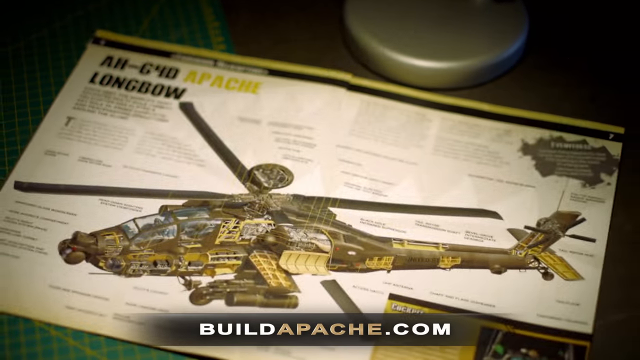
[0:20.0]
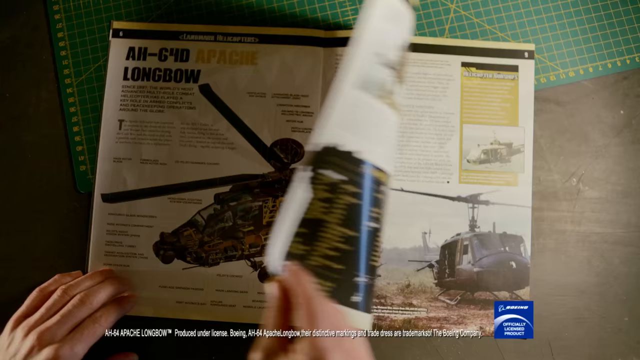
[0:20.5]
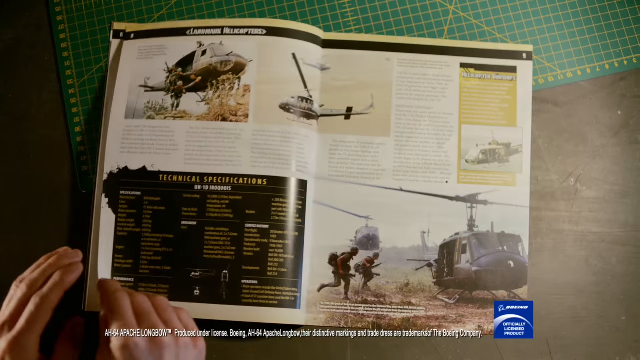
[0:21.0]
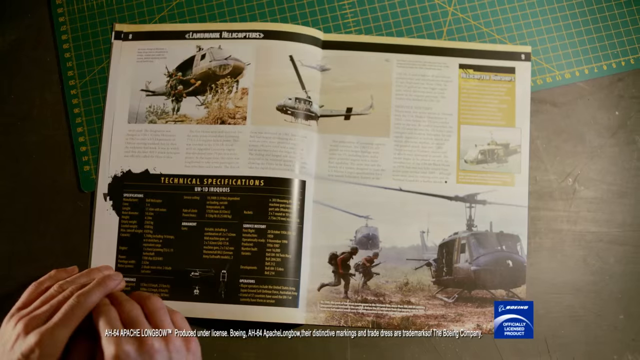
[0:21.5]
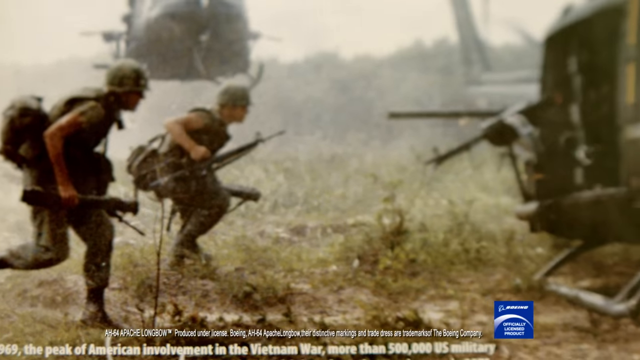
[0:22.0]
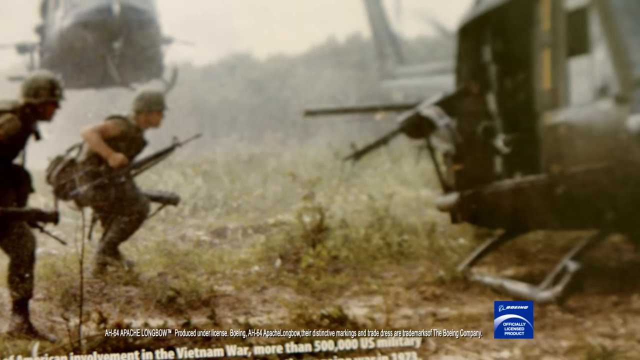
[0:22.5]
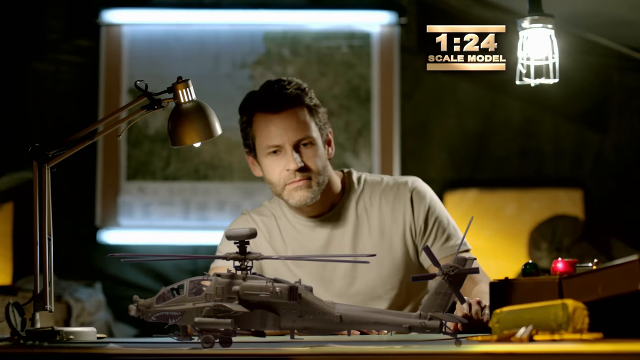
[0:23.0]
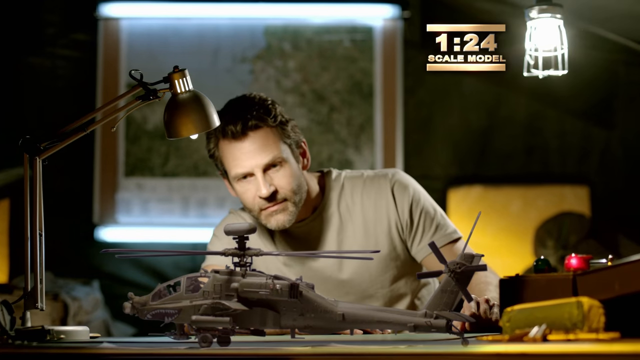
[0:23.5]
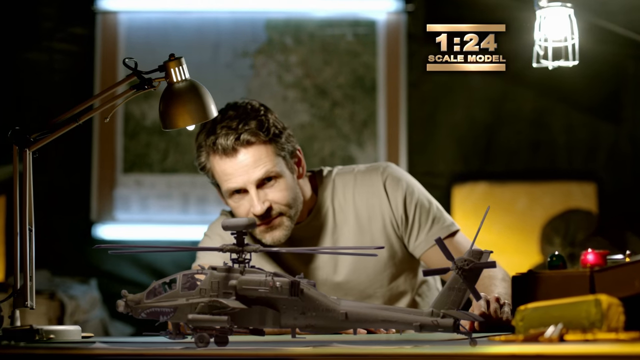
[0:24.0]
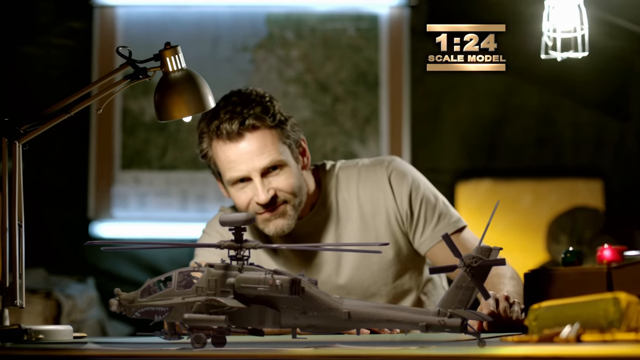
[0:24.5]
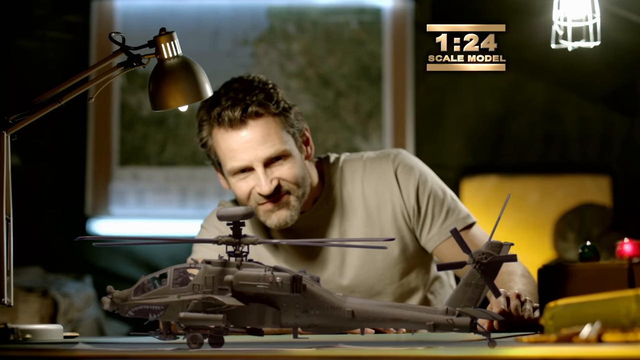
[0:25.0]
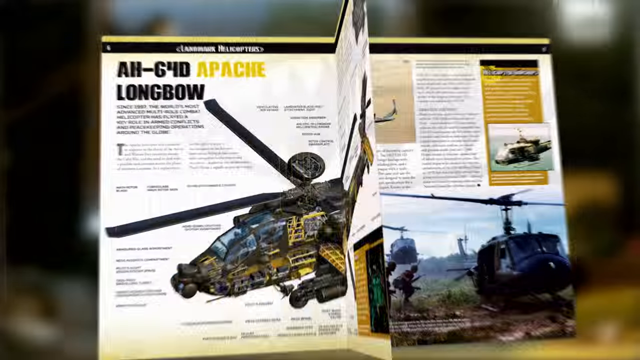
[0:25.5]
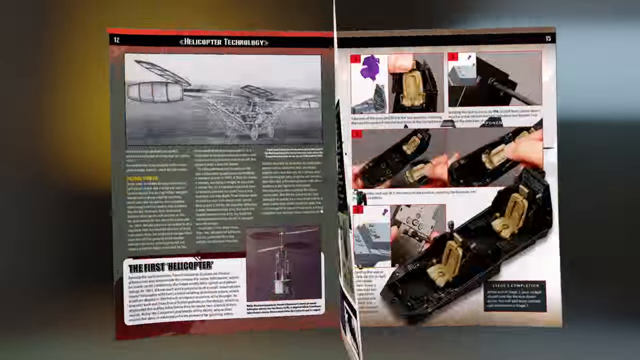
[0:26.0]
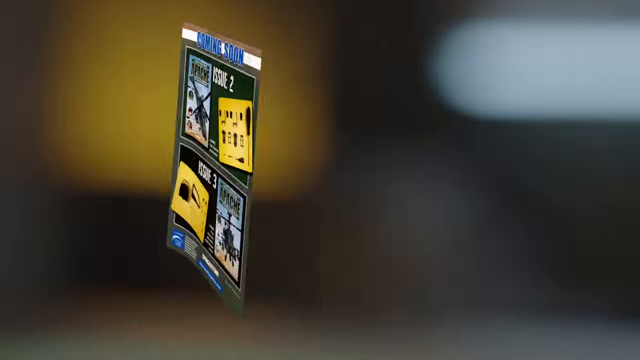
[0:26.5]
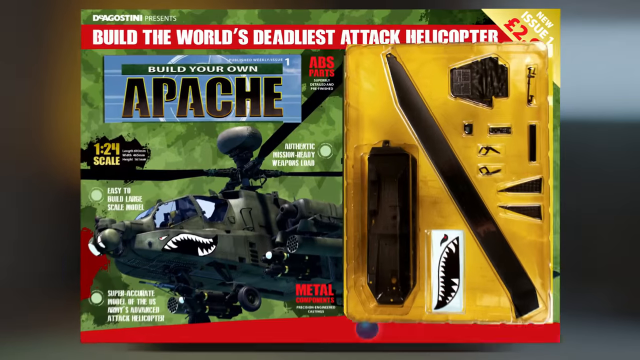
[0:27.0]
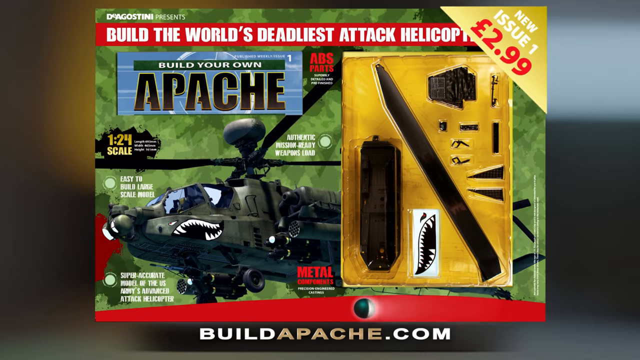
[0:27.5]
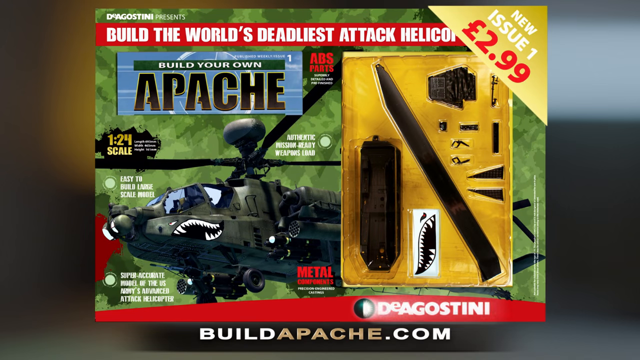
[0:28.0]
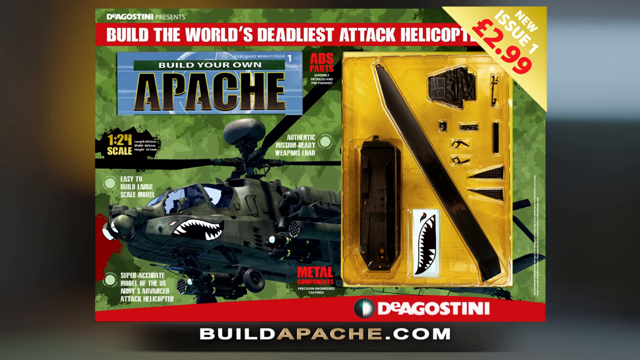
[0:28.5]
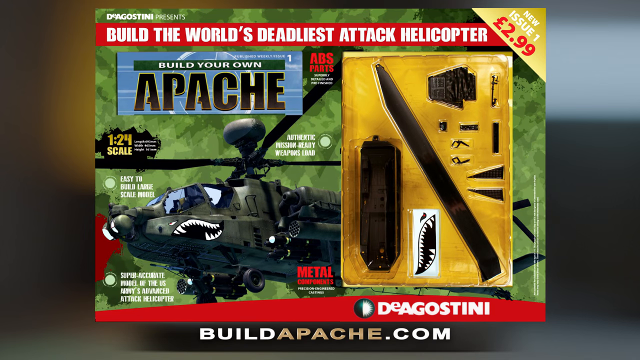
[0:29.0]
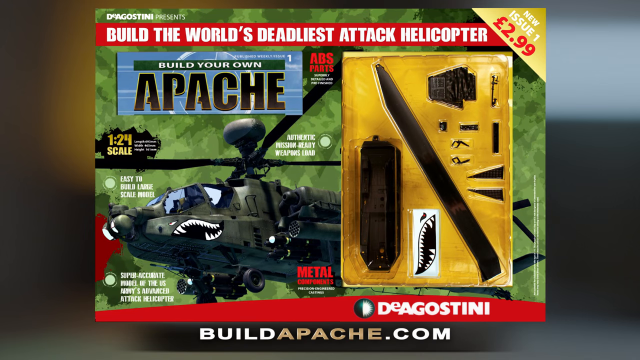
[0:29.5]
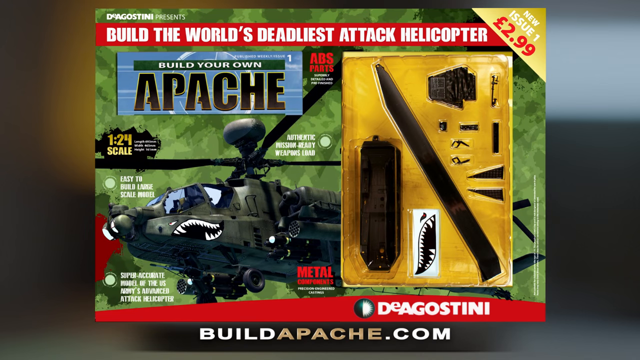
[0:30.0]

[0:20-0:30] The man flips the pages of the book, and military members are shown running to a helicopter. The man then looks at the helicopter he built, in front of him at the desk. It is identified as a 1 to 24 scale model. An animation of the book appears, quickly flipping through each page and ending on the back of the magazine, which reads "coming soon" and shows an issue two and an issue three. The view zooms out to show the whole box, which reads "build the world's deadliest attack helicopter, build your own Apache." In the right-hand corner, a gold triangle shows "new issue one" at 2.99 euros. On the right of the box are visuals of different parts of the helicopter, and on the left is a visual of the fully built helicopter.